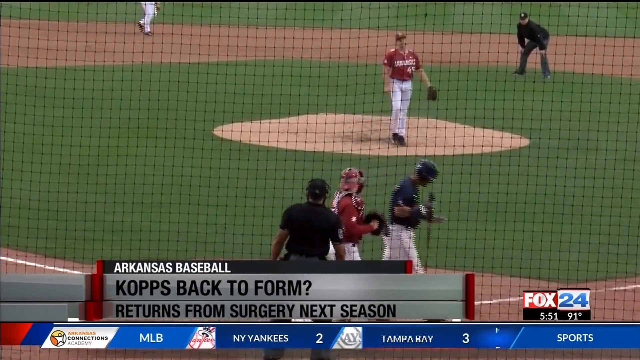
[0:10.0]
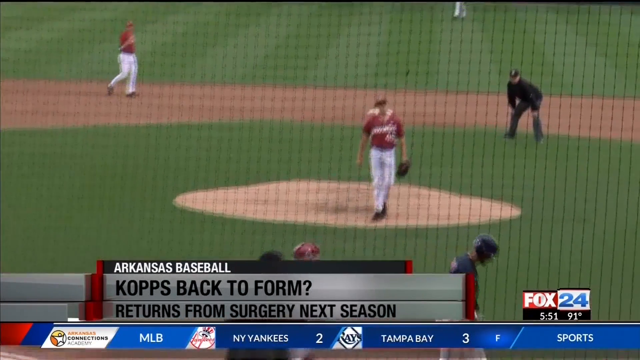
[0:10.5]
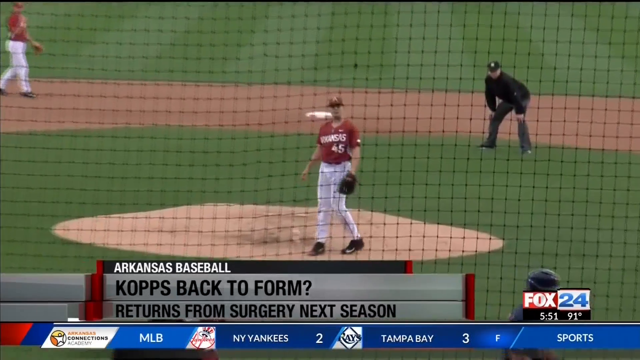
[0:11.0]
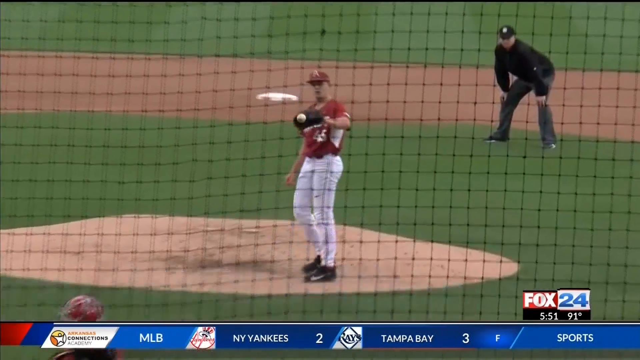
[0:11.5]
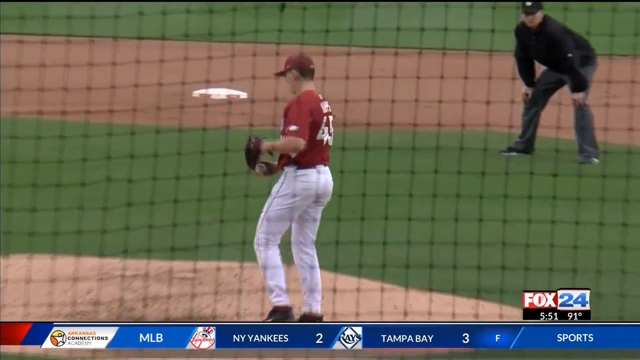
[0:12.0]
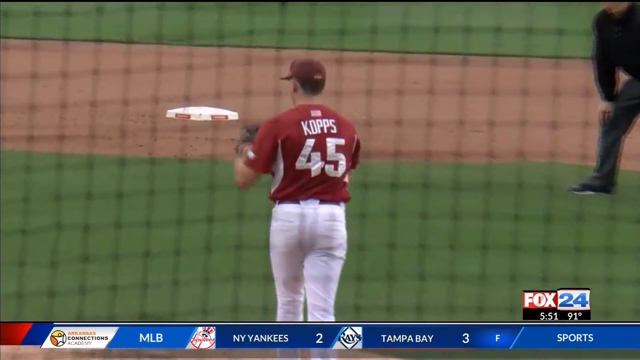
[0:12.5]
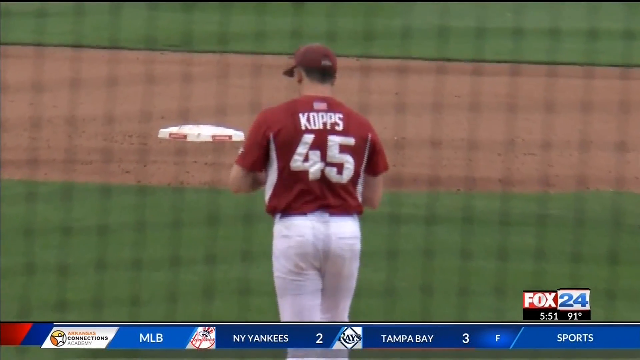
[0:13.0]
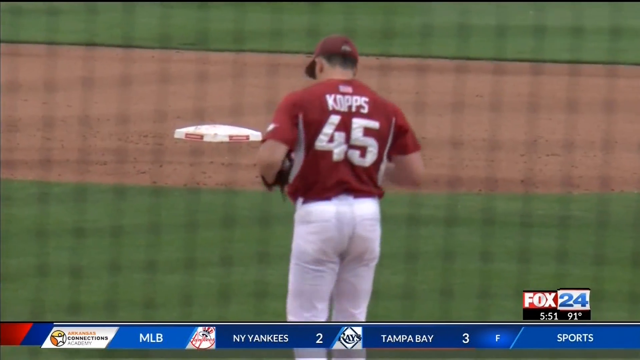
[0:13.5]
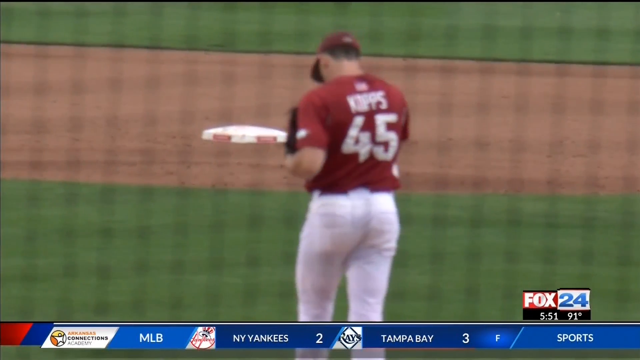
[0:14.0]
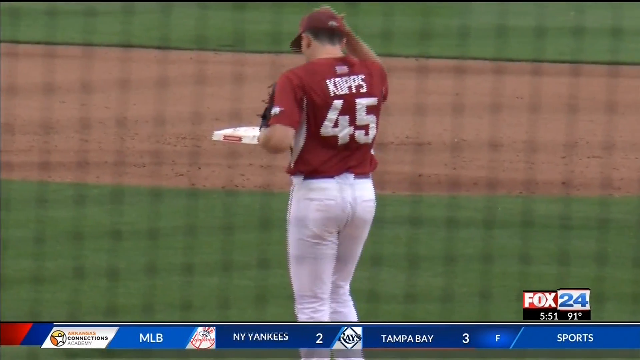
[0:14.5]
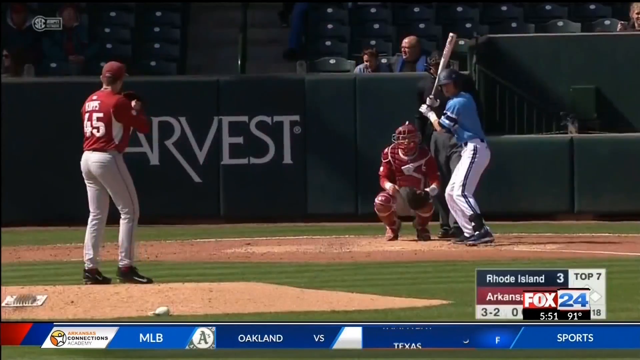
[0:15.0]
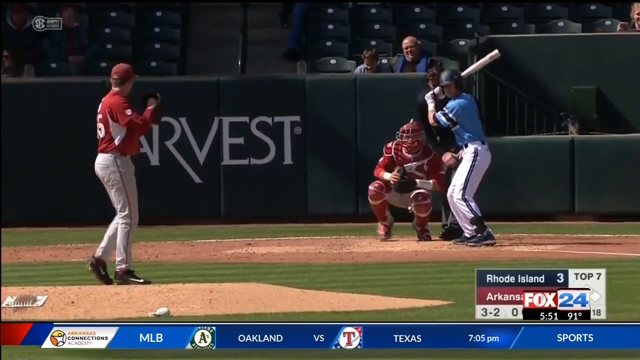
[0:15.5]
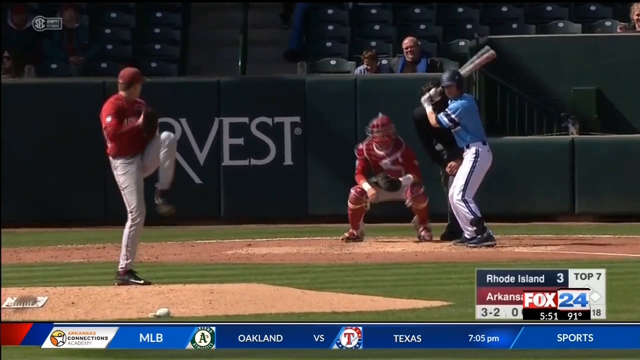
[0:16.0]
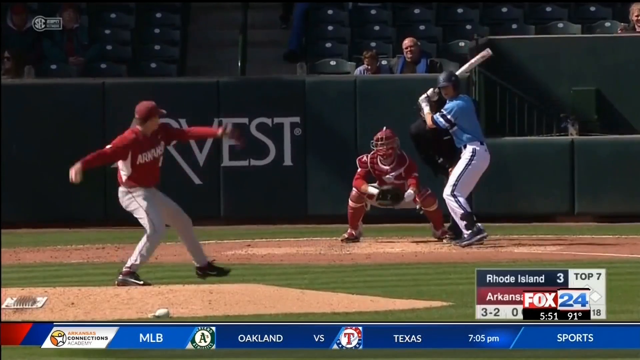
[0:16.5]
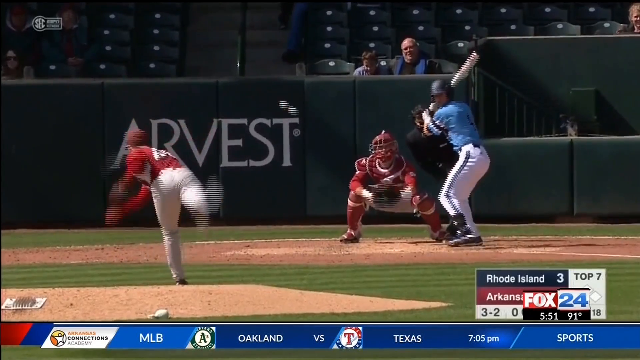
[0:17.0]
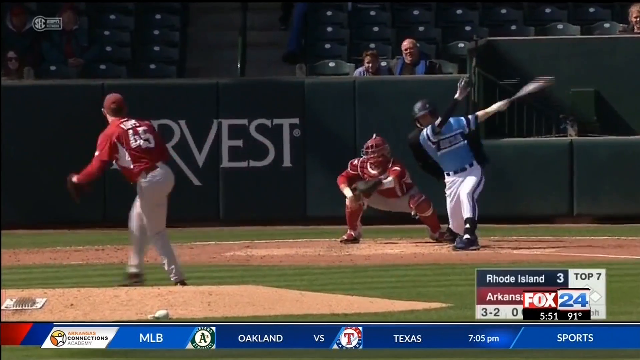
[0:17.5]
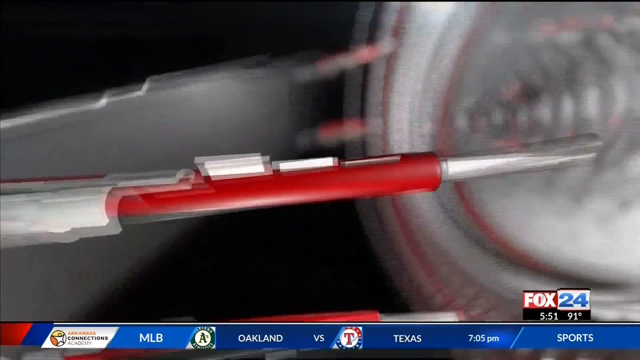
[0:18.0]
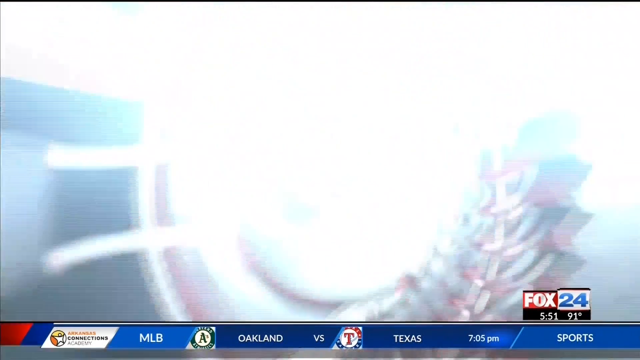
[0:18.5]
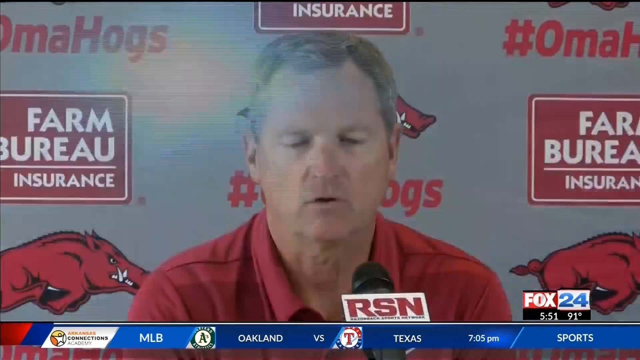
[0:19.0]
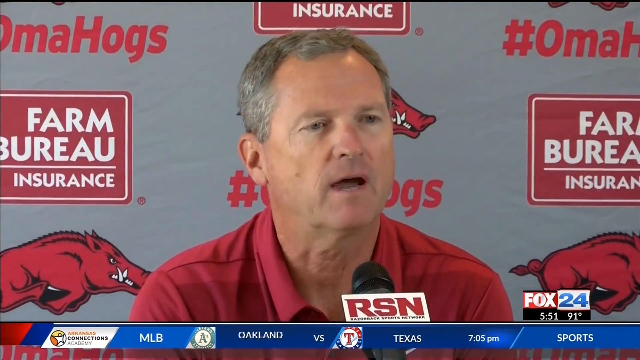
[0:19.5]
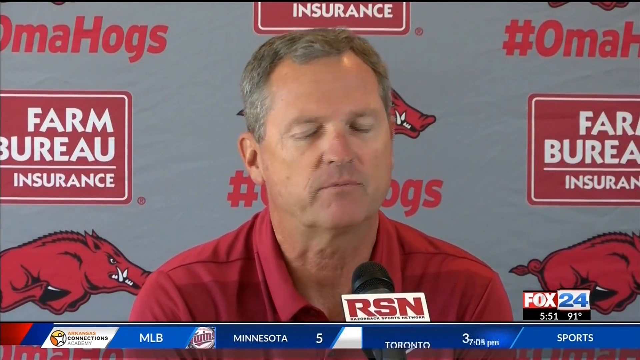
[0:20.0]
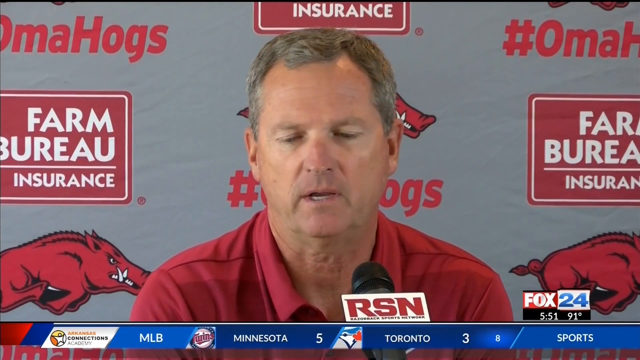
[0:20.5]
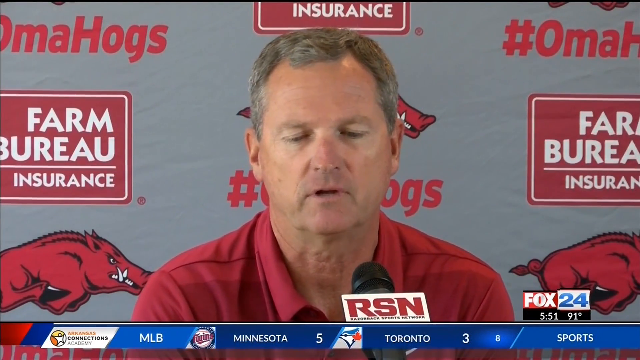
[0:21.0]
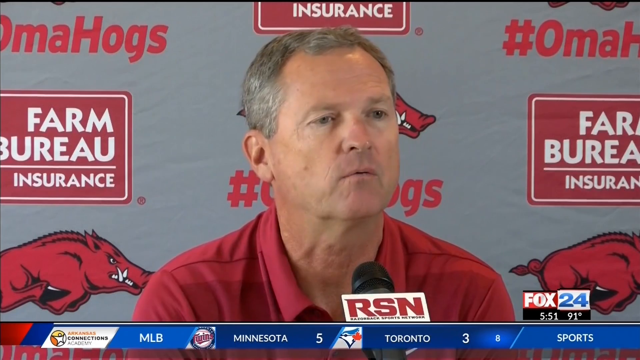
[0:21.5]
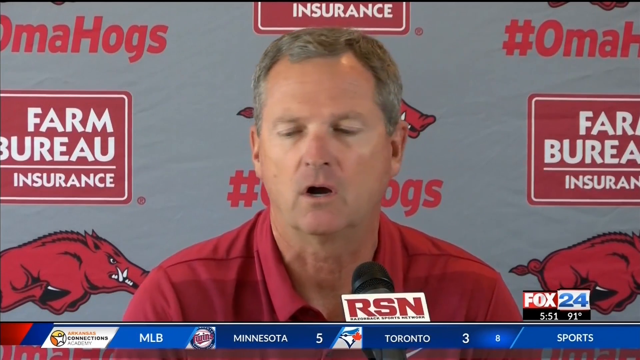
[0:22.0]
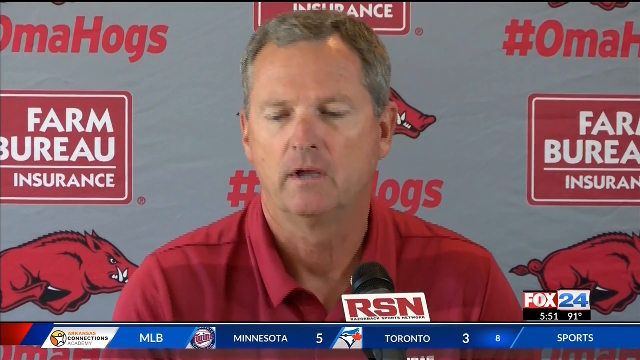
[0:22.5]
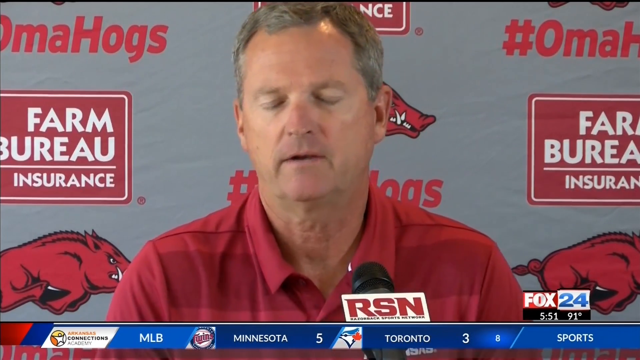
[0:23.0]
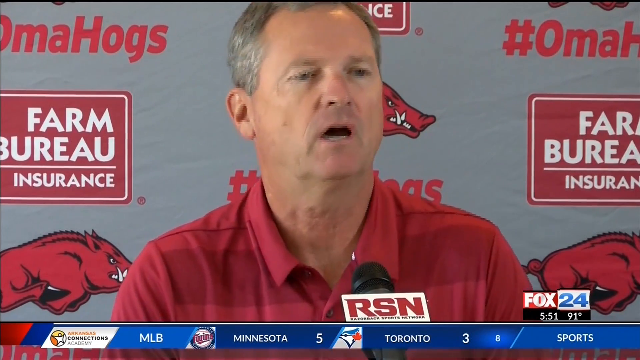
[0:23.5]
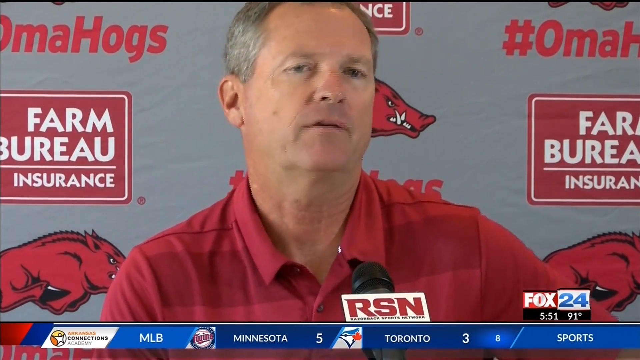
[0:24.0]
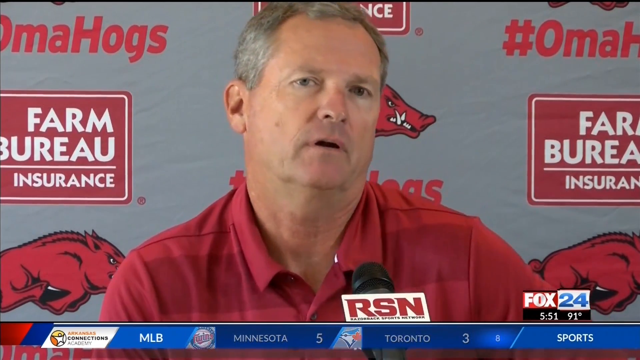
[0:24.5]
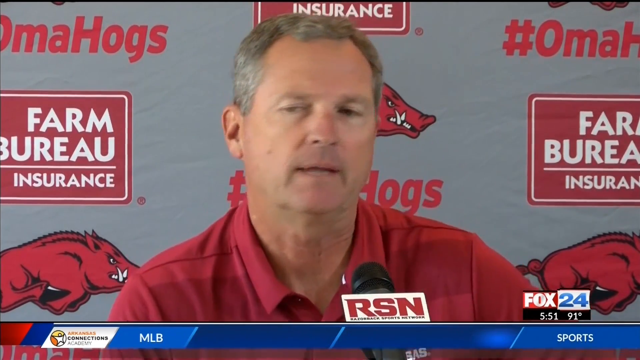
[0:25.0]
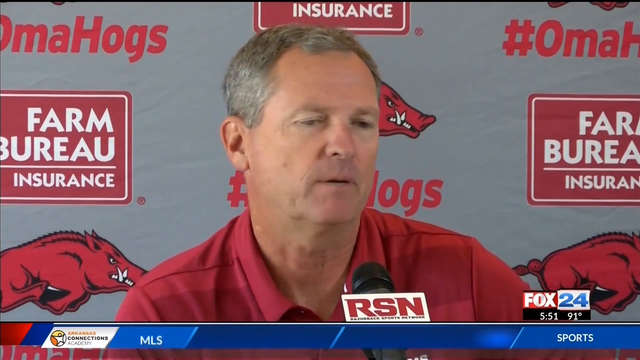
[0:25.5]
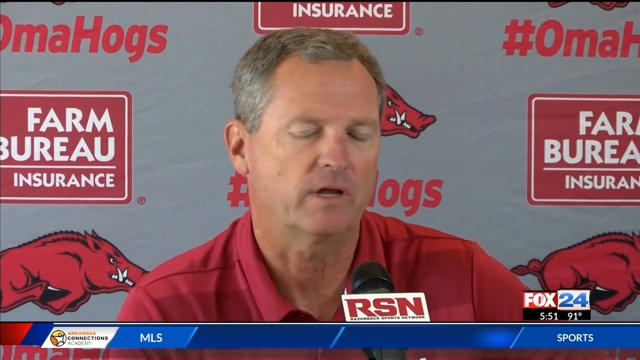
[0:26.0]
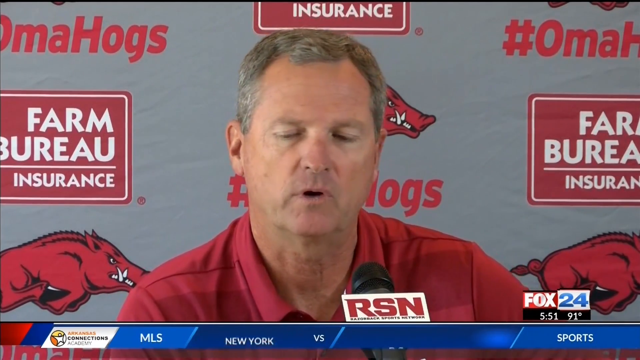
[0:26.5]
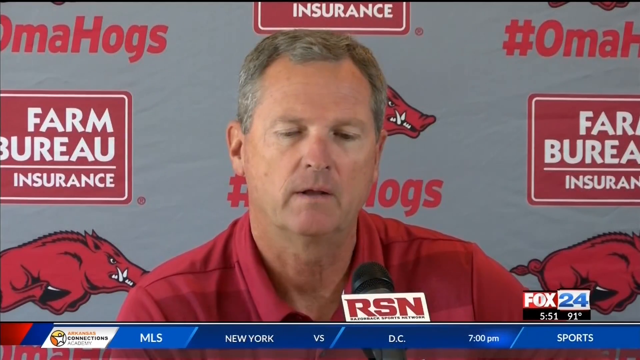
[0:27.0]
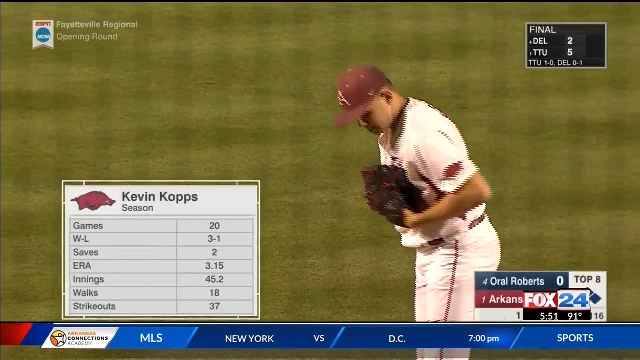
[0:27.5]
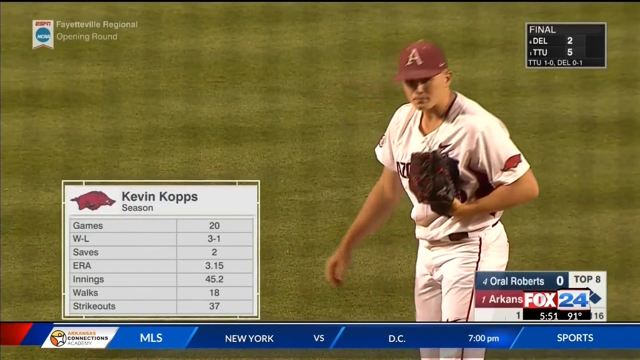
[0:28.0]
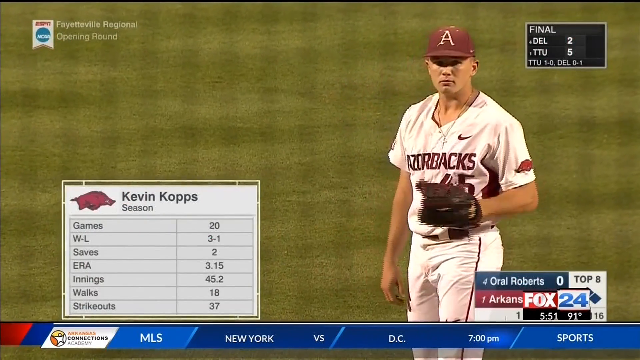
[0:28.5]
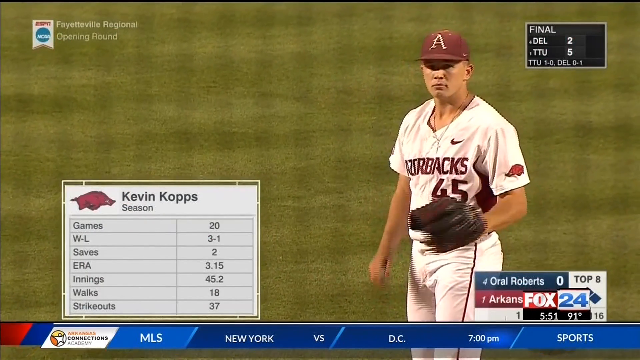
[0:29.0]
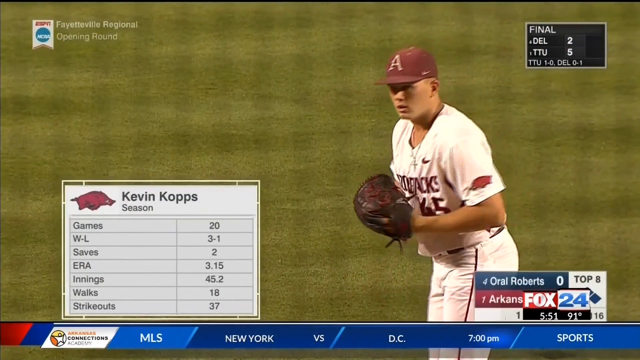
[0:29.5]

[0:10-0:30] Number 45, apparently Copps, is on screen with the text "next season" and "Copps back to form?" Along the bottom, text shows "Major League Baseball" with a New York Yankees and Tampa Bay 3 score. Copps, number 45, wears a red top and gray pants and throws to a right-handed batter for a strike. The video then cuts from the game to Omaha's Farm Bureau Insurance, where a man is talking, with "RSN" shown. Copps gets the ball, throws it and gets a strike, and the man is talking again. Season statistics for Kevin Copps appear: 20 games, a 3-1 record, two saves, a 3.15 earned run average and 45.2 innings pitched.